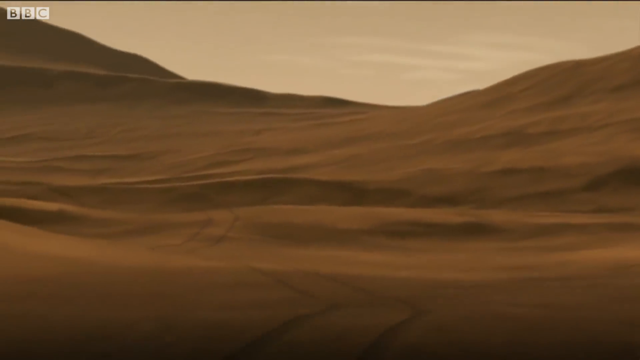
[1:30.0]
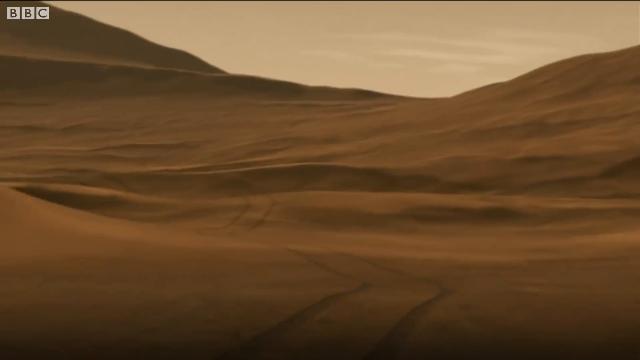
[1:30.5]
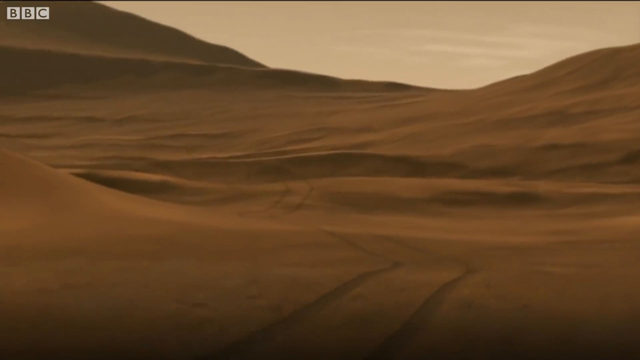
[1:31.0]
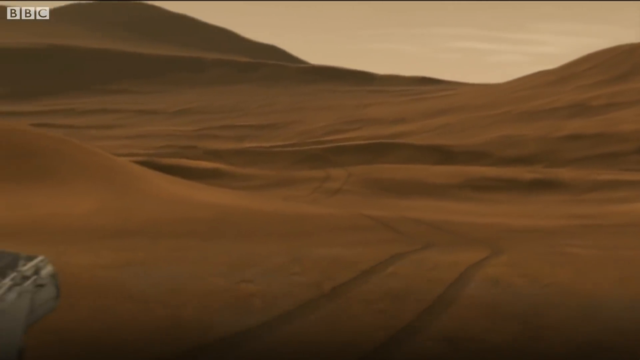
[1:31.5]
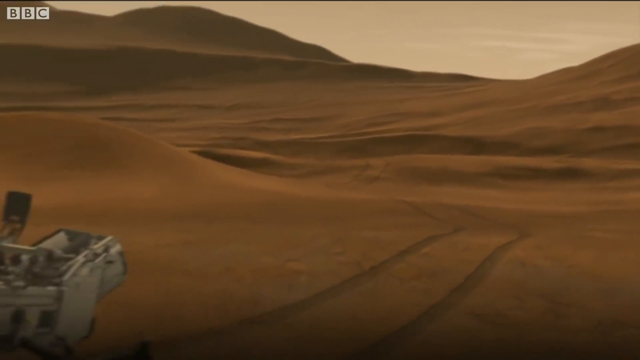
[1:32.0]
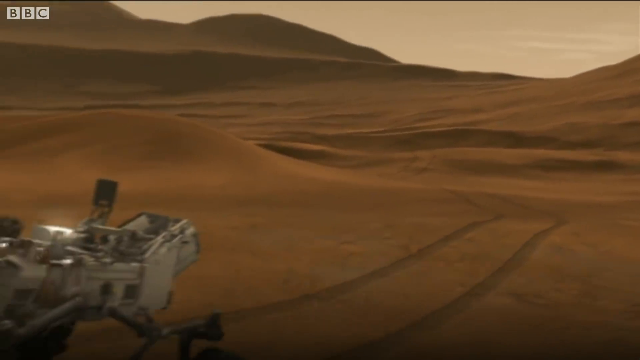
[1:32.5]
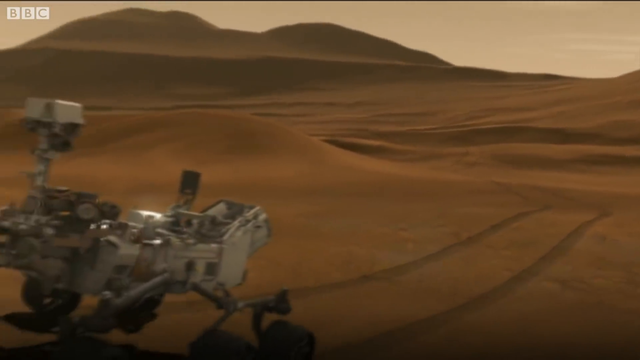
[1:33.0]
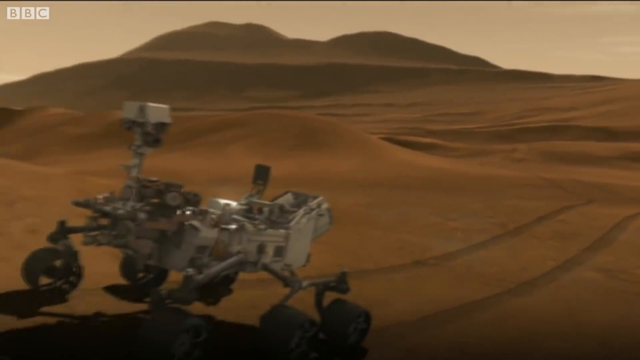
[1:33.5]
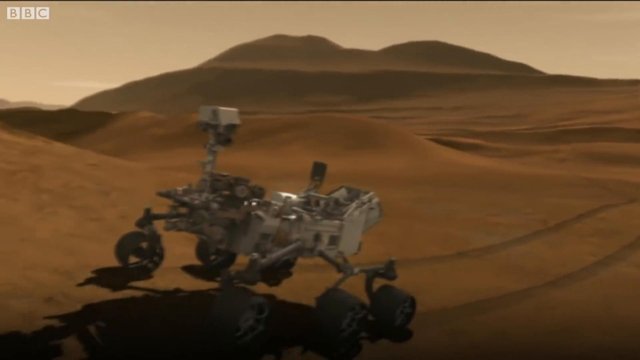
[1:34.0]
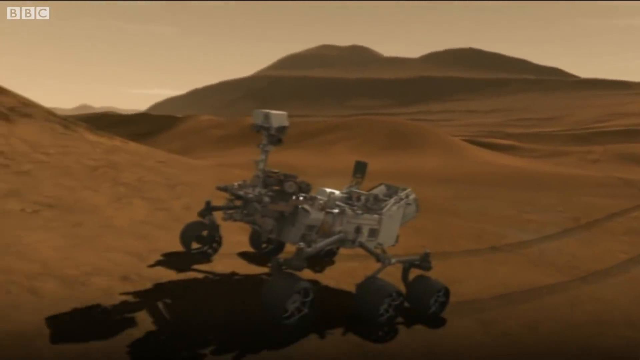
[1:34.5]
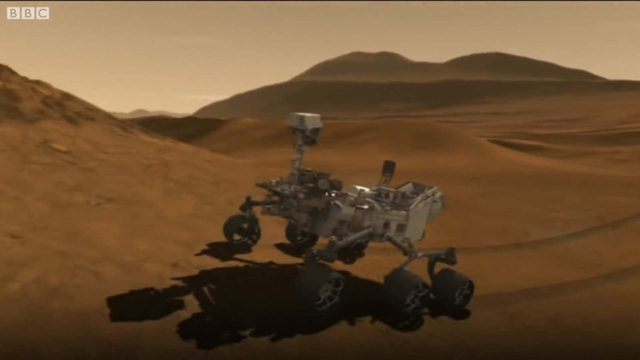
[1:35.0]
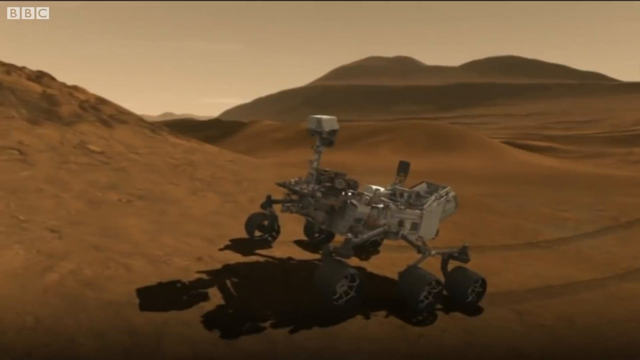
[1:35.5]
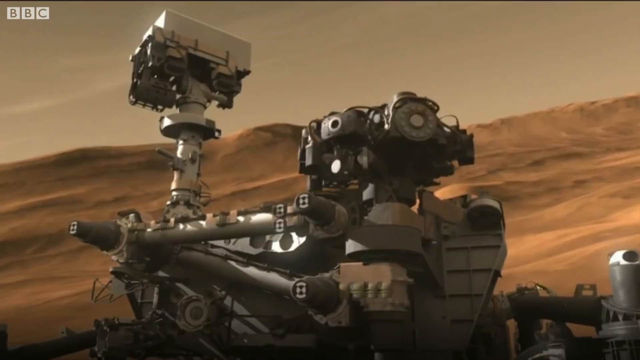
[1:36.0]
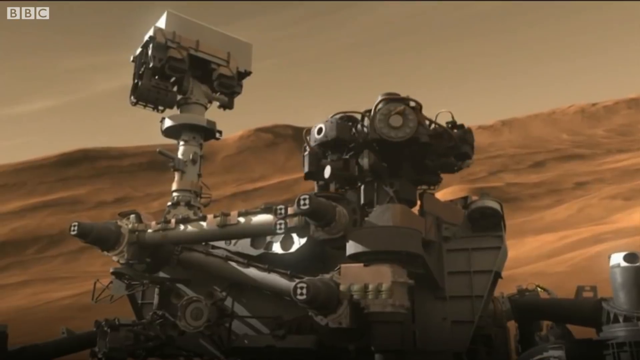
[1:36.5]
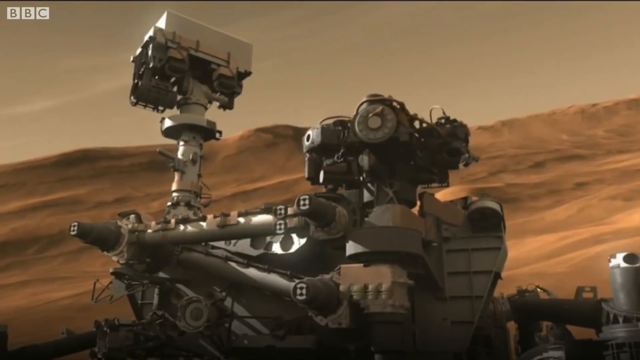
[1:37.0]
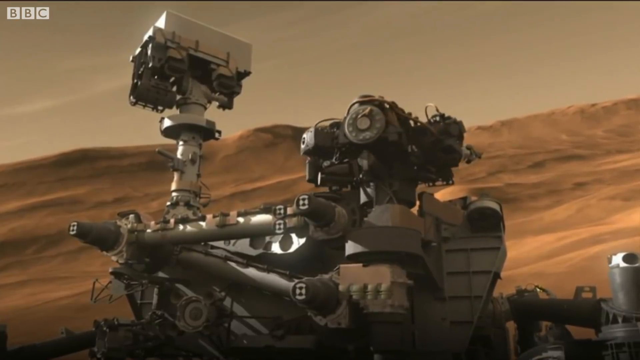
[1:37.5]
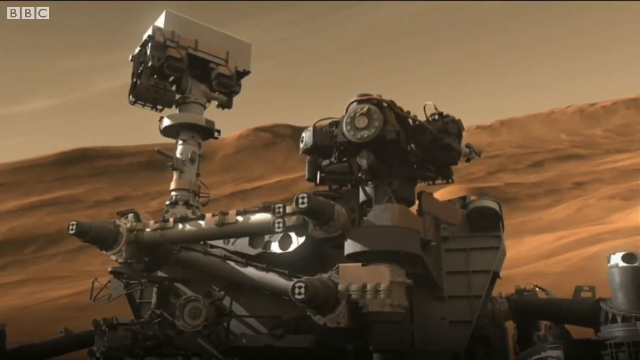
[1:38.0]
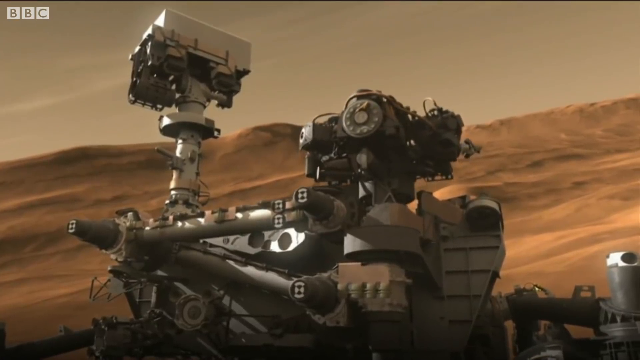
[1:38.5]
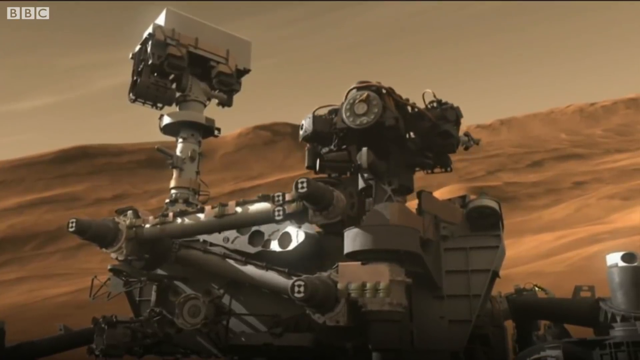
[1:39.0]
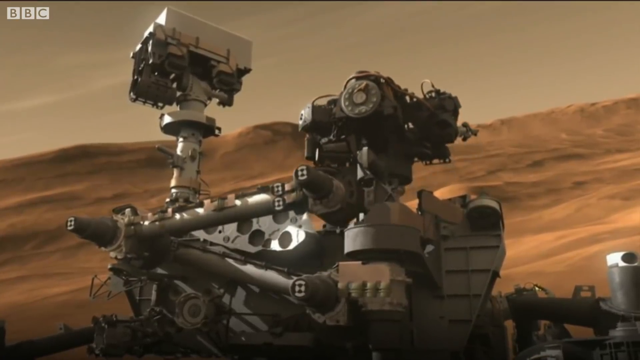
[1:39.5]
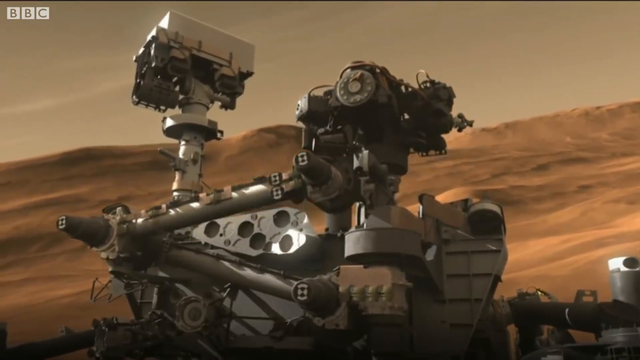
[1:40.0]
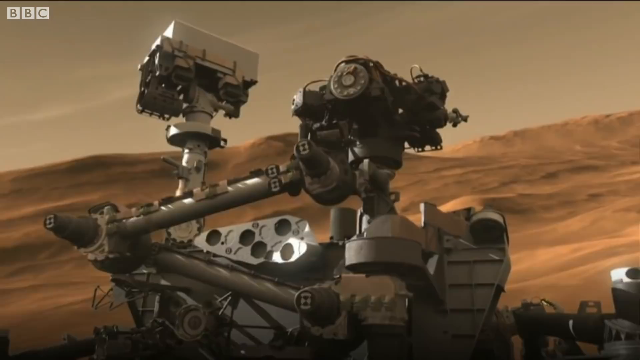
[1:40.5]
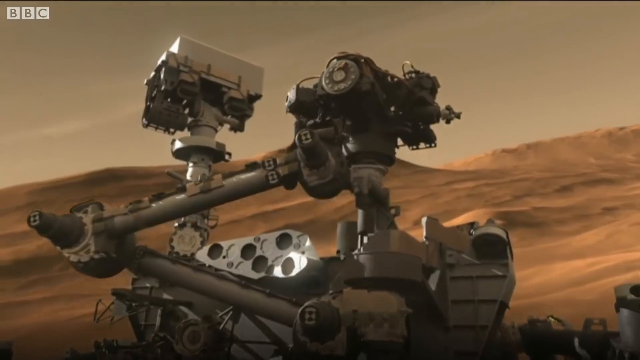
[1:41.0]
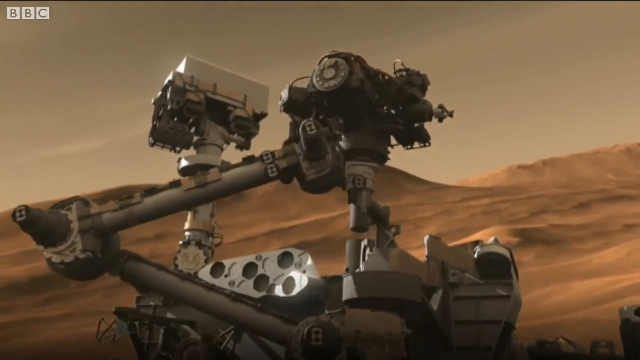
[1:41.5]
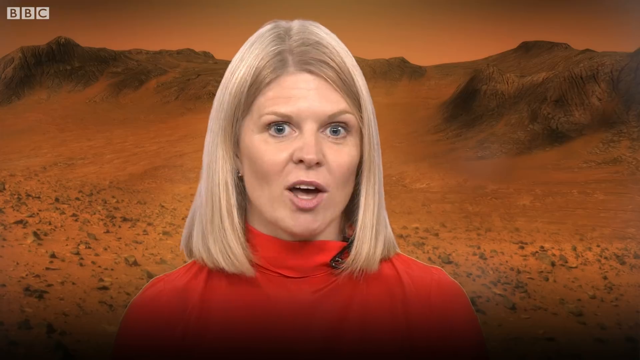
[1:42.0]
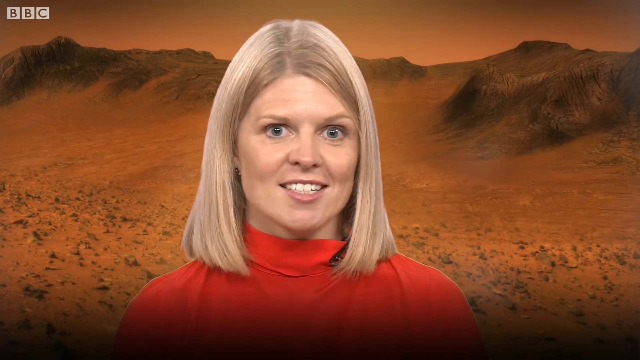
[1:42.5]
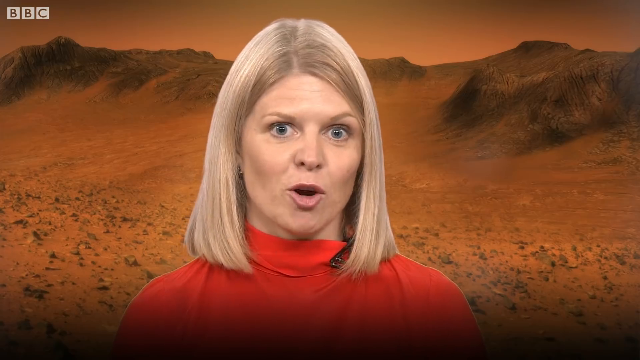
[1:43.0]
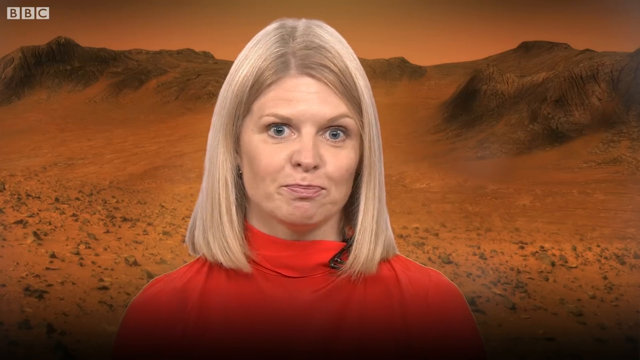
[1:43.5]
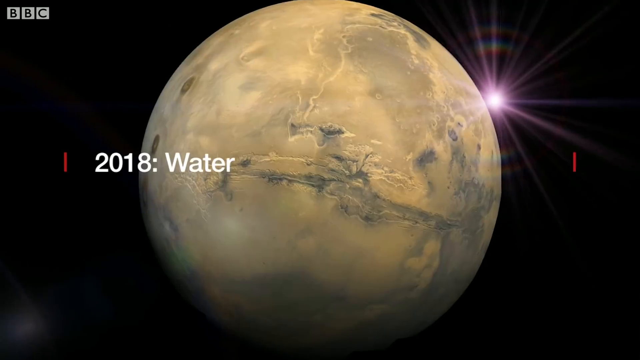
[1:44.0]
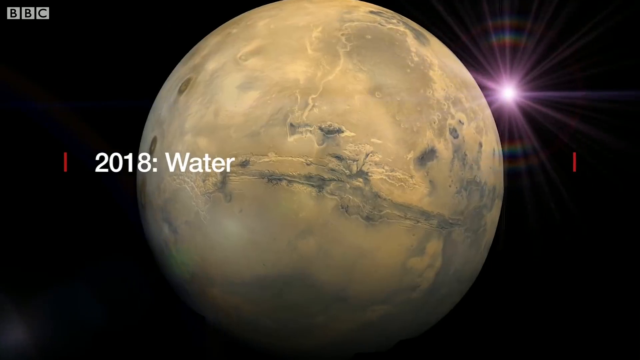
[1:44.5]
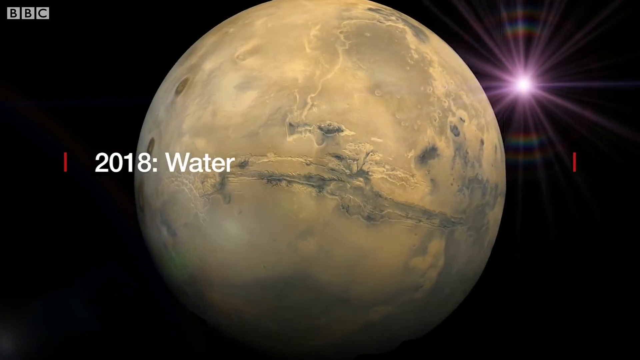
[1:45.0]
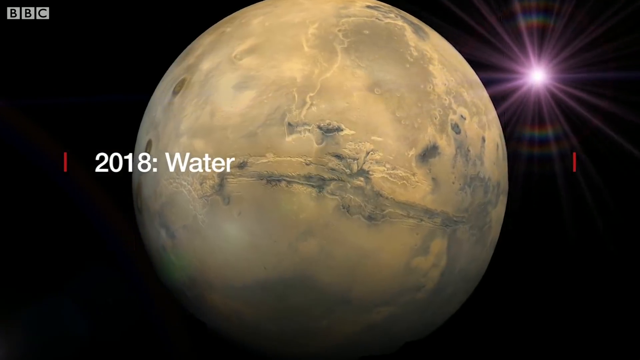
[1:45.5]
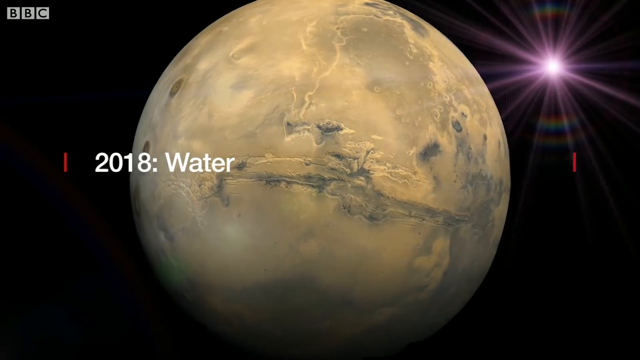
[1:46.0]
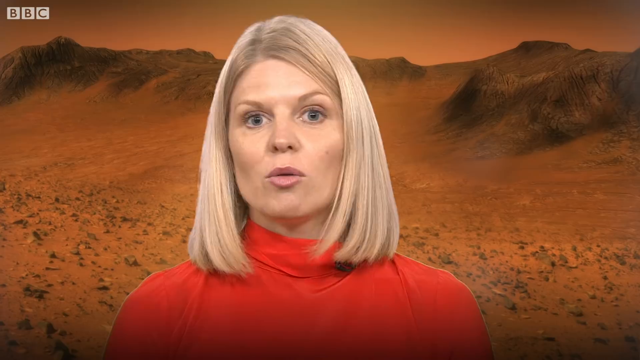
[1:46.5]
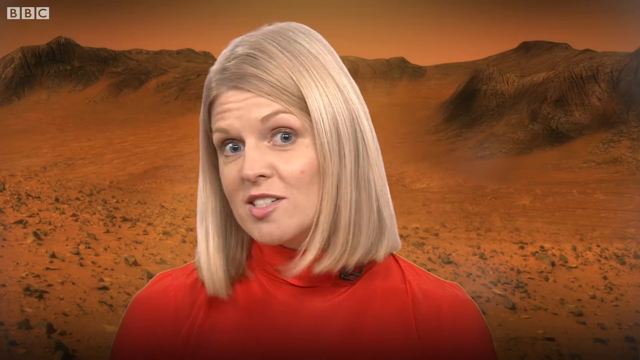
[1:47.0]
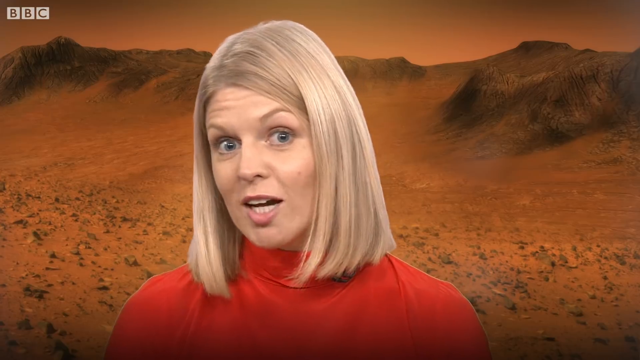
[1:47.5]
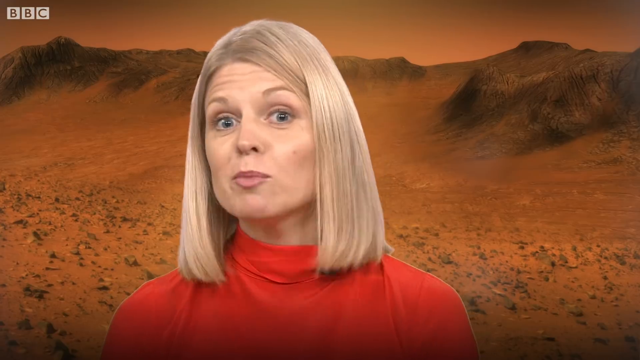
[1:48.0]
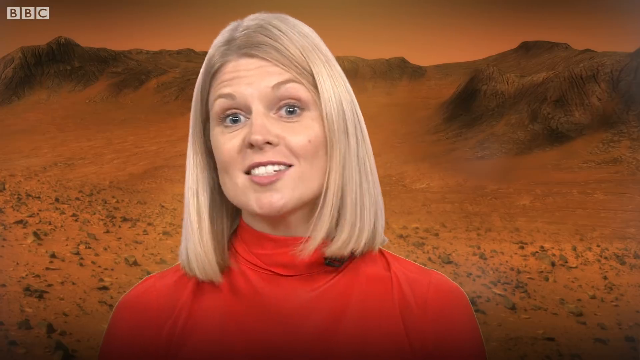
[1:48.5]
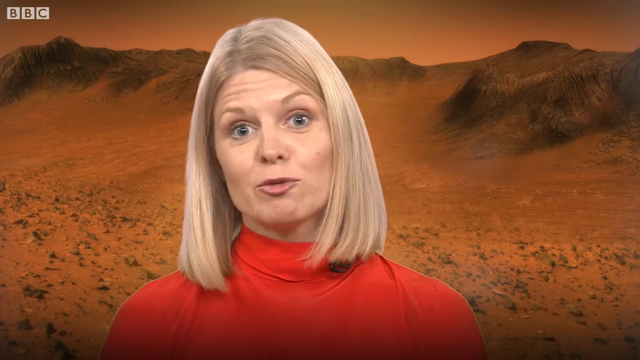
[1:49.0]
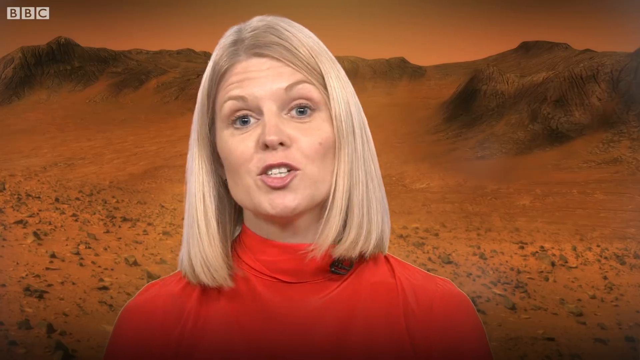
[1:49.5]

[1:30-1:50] The camera focuses on a dusty ground that looks like a desert, then slowly zooms out to reveal a complex robot-like object that opens up, with camera-like parts on it opening. The robot moves across the desert. An Earth-like planet animation appears in the background, with the text "2018 water" in front. Behind it is a monochromatic light, purple in colour, producing rainbow-like colours. The news presenter in a red top explains what is happening; she has a camera attached to her top. The overall background is a desert that looks like it could be Earth, or possibly another planet.